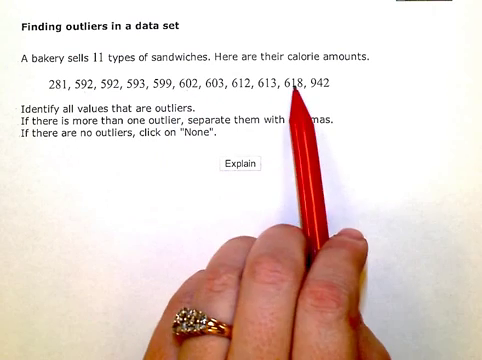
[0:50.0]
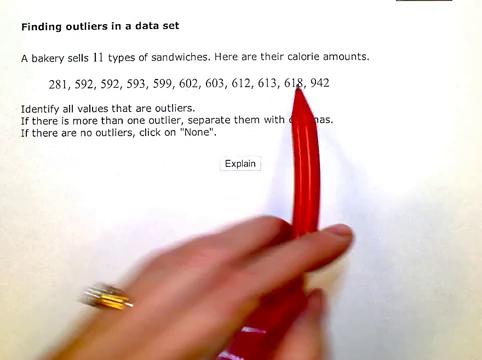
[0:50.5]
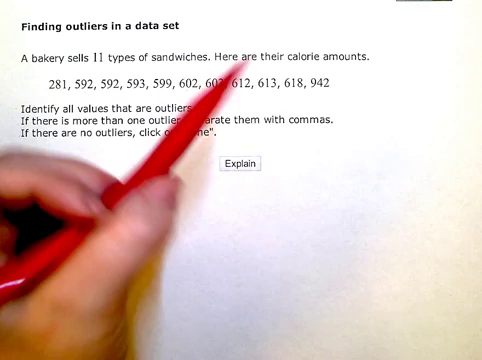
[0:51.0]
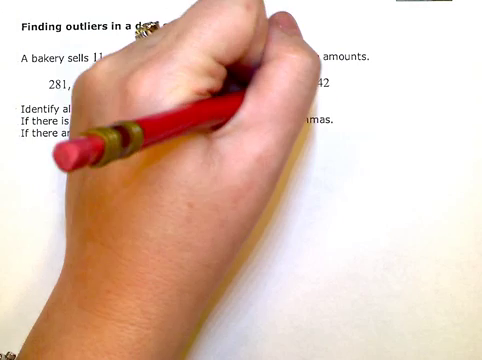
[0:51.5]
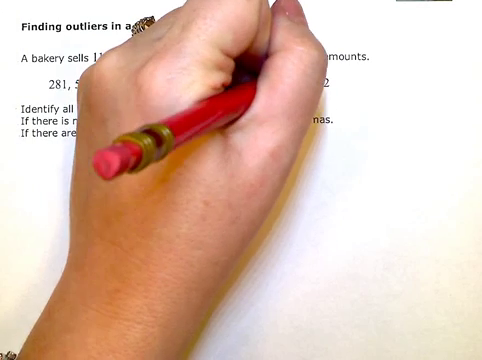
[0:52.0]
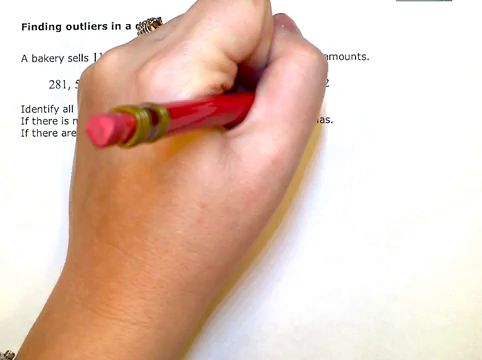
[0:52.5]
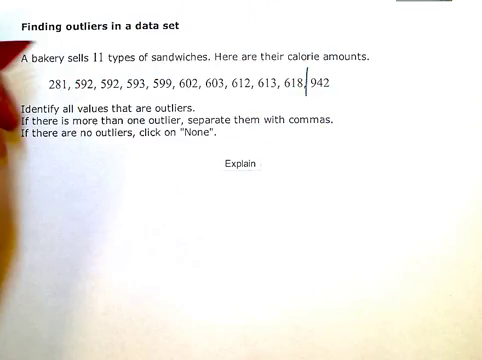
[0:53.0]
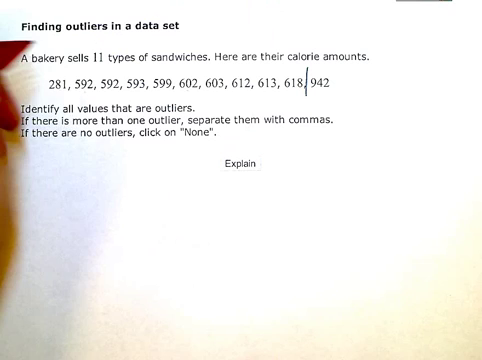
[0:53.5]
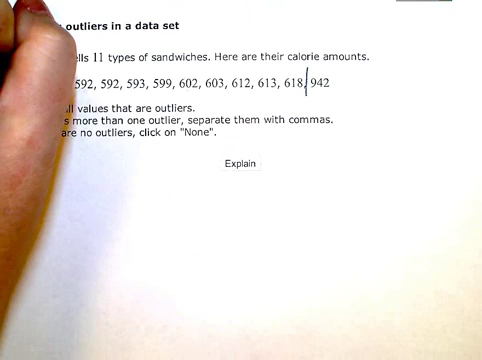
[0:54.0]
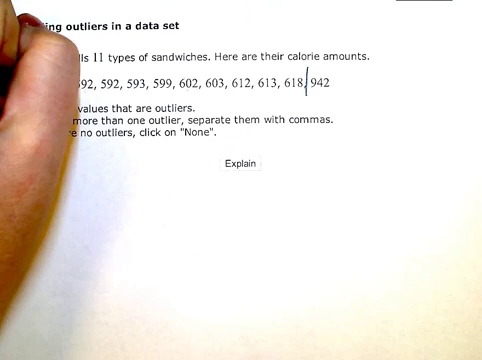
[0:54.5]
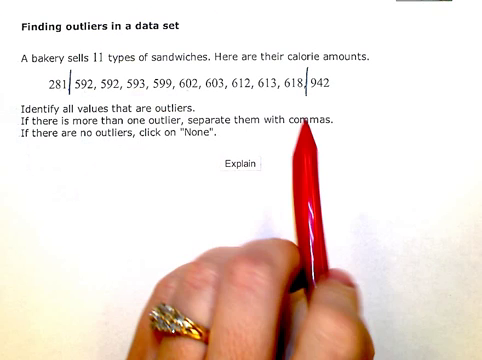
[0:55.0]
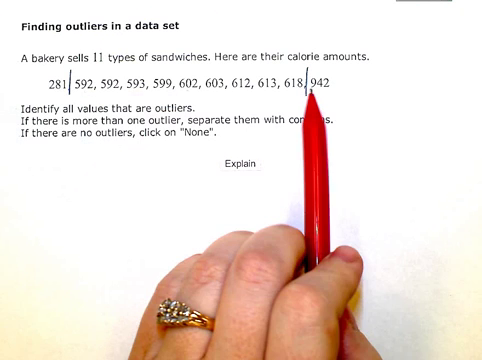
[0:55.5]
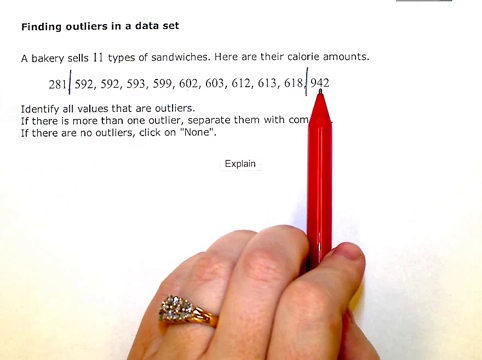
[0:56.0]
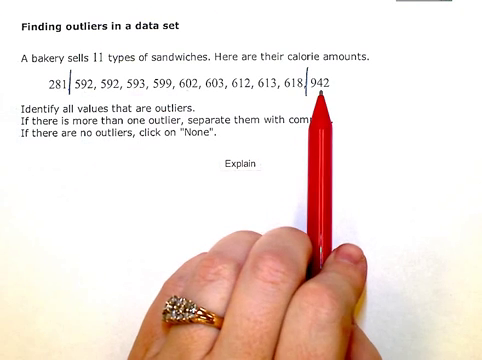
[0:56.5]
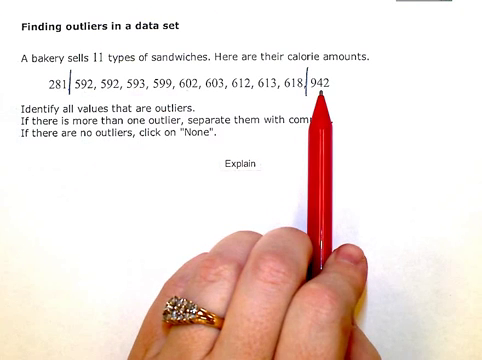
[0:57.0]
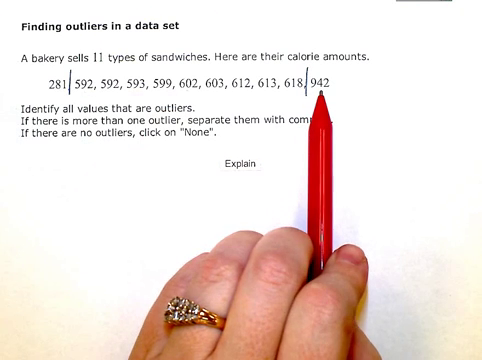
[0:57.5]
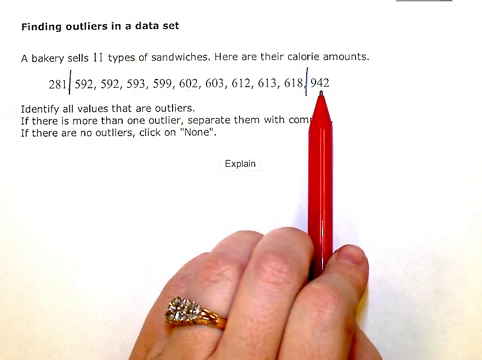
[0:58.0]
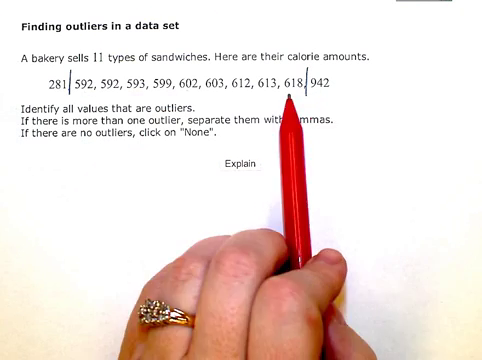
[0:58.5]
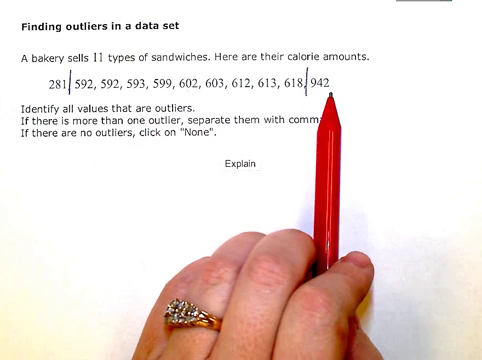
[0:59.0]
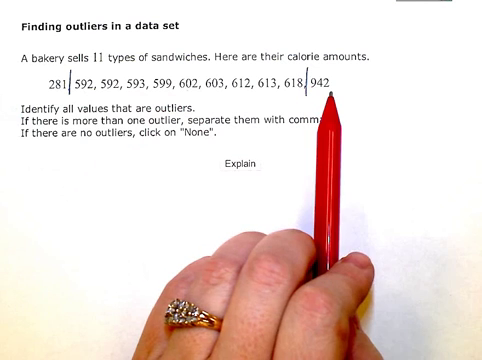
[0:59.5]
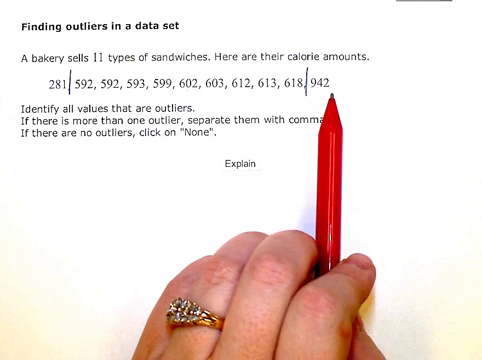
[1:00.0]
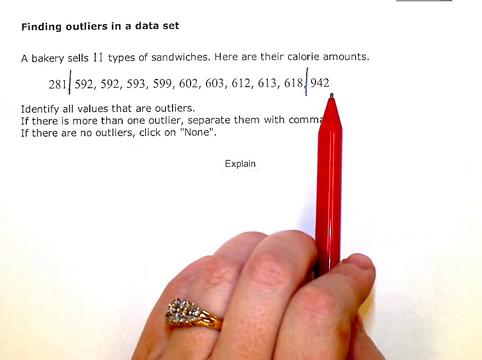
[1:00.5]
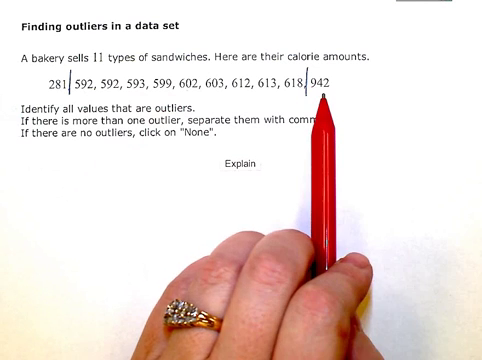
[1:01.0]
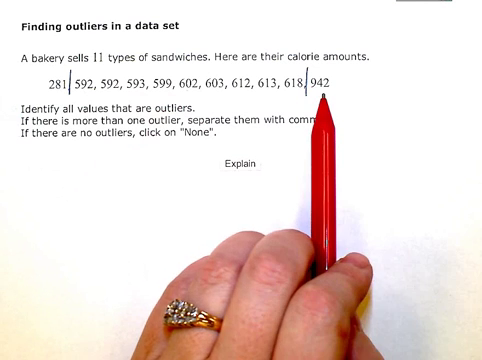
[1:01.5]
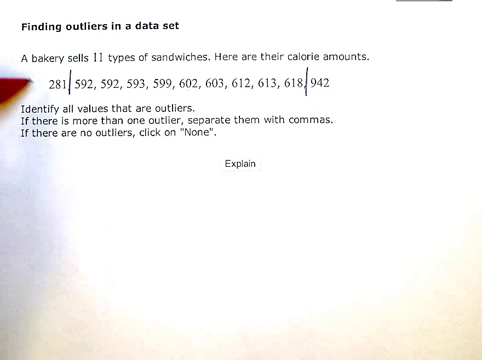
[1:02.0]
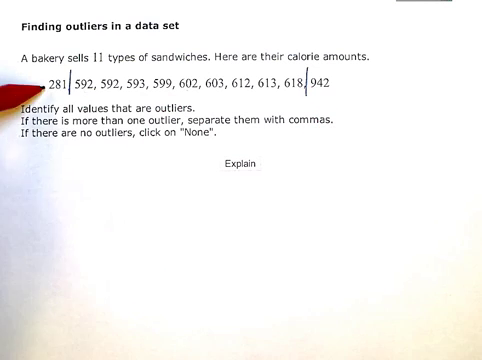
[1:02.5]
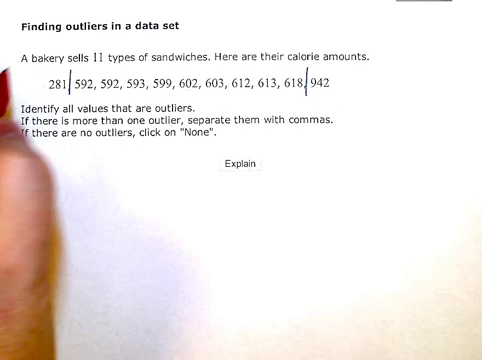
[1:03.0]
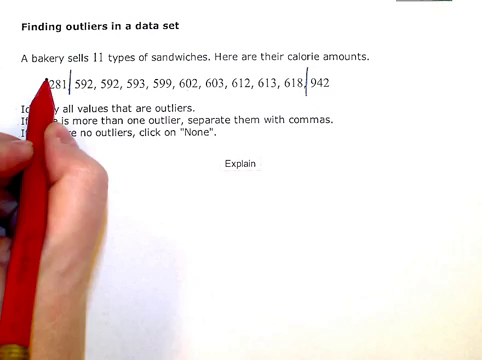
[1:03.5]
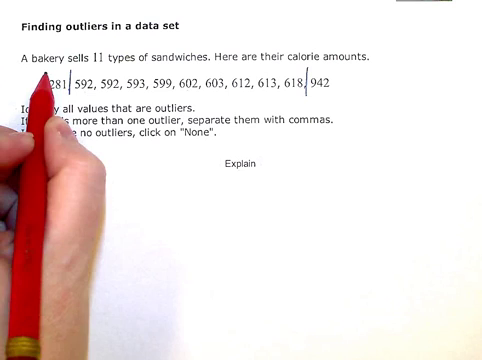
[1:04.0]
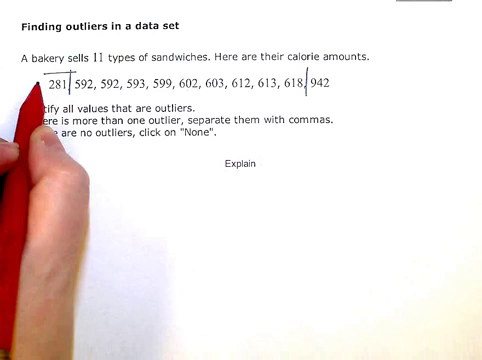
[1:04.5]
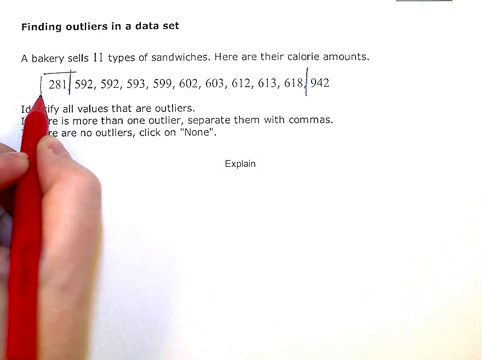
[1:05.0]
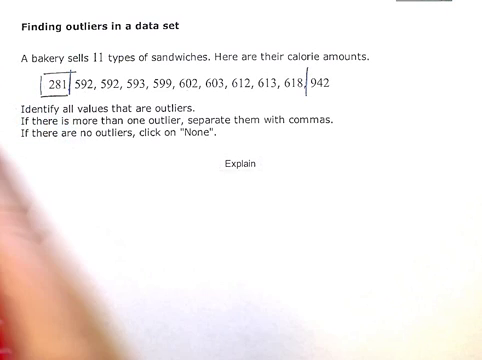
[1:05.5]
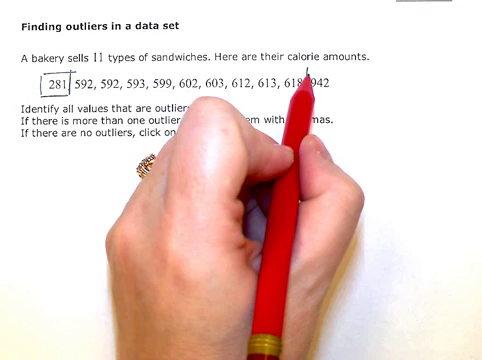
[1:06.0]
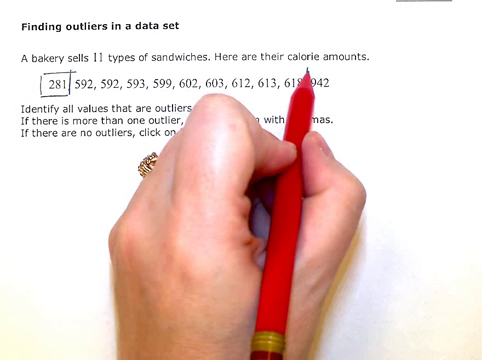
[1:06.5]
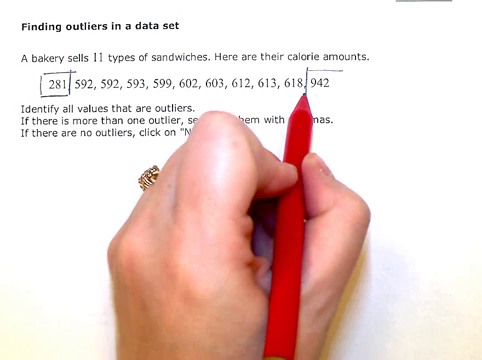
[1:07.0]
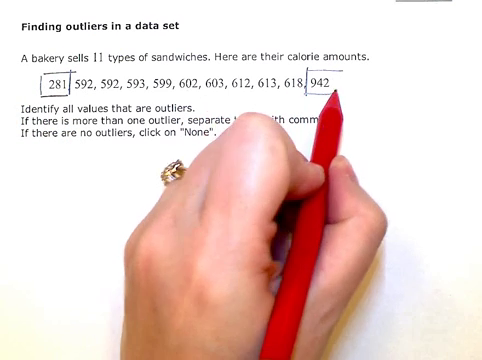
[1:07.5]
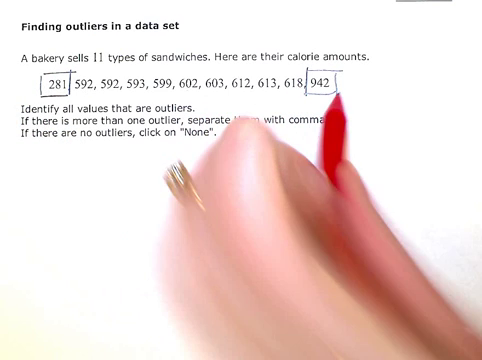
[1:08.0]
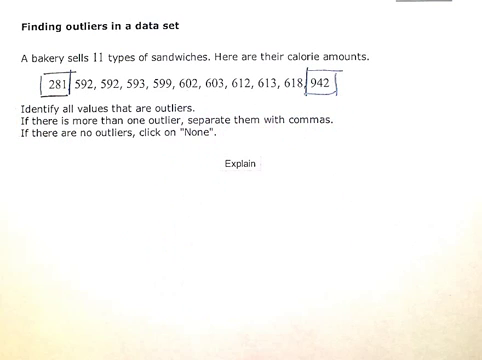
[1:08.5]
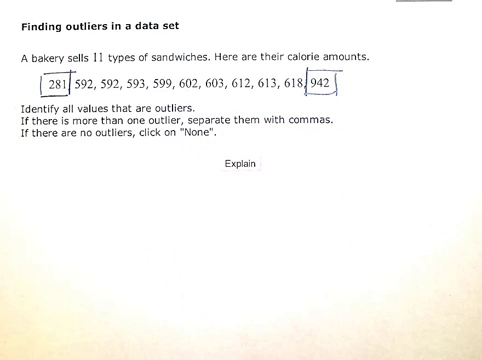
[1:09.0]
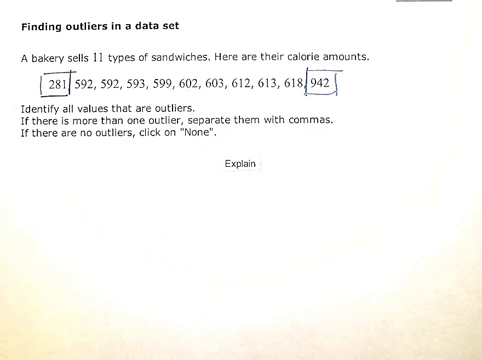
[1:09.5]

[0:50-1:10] The pen points to the second-from-last number, 618. The hand holding the pen then comes all the way across the screen, covering it from bottom to top. A diamond ring is on the ring finger, the other fingers are curled in, and the thumb presses against the index finger, making a small fist with the pen pushed into the gap between the curled fingers and the thumb. The red pen is a pencil with an eraser on the end, and it touches the diagram. Marks are made with the red pencil around 281 and 942, the initial and end numbers. The pencil is then used as a pointer again, held between the thumb and index finger, pointing at the 942 mark.